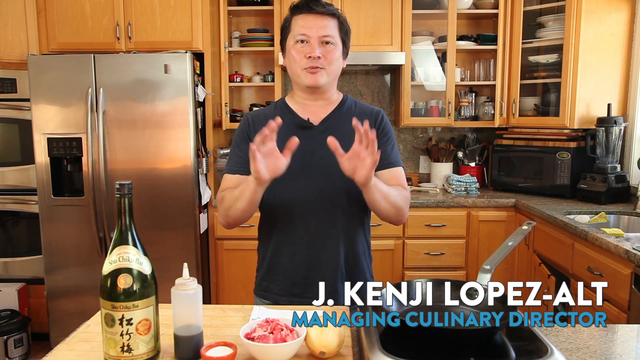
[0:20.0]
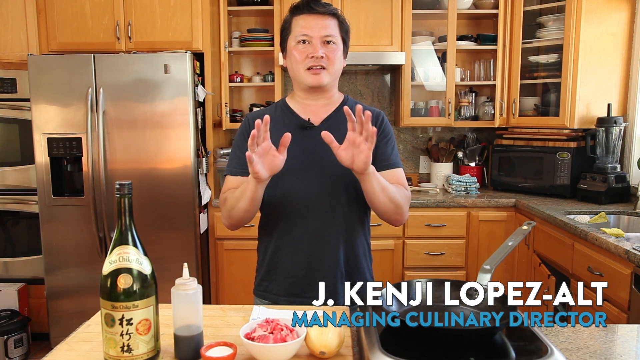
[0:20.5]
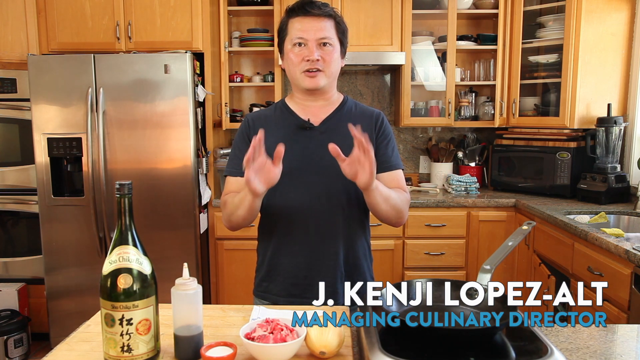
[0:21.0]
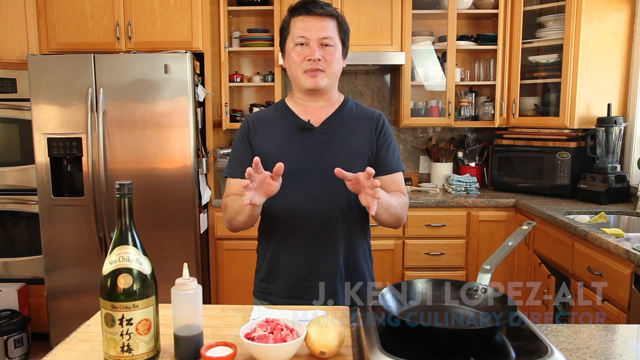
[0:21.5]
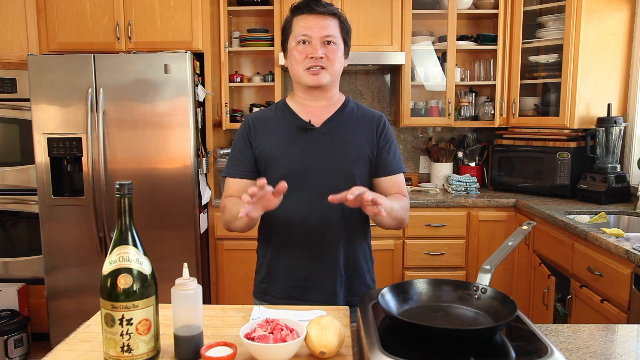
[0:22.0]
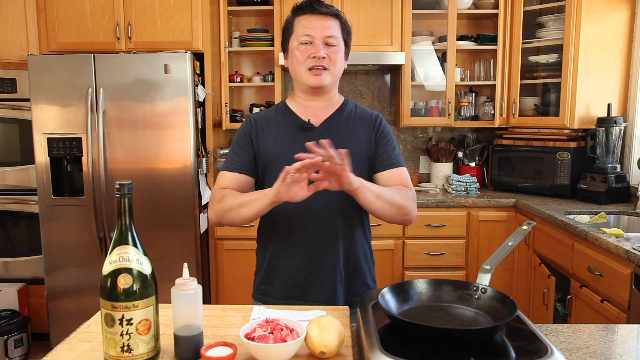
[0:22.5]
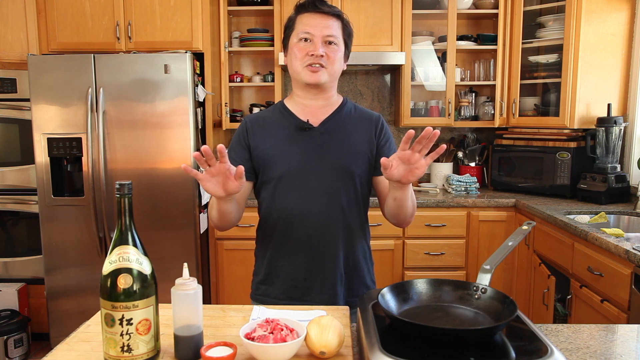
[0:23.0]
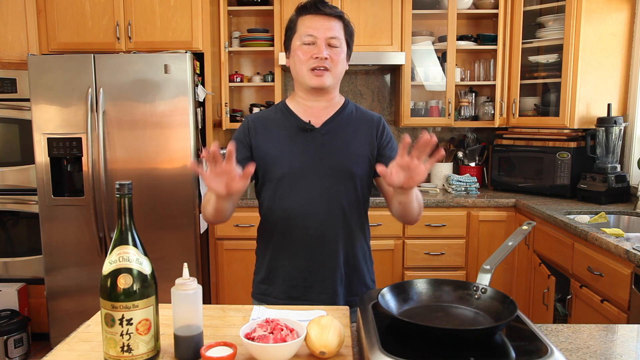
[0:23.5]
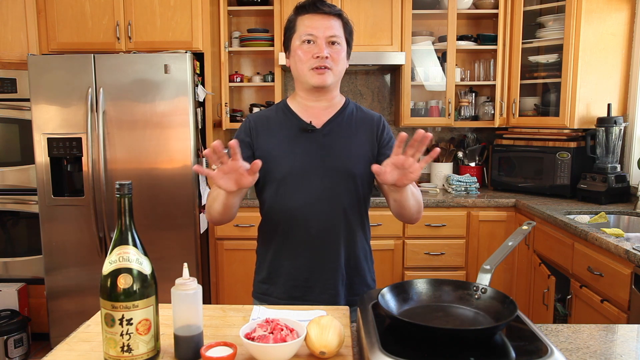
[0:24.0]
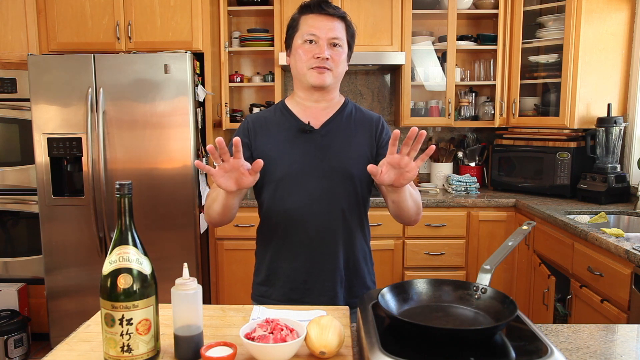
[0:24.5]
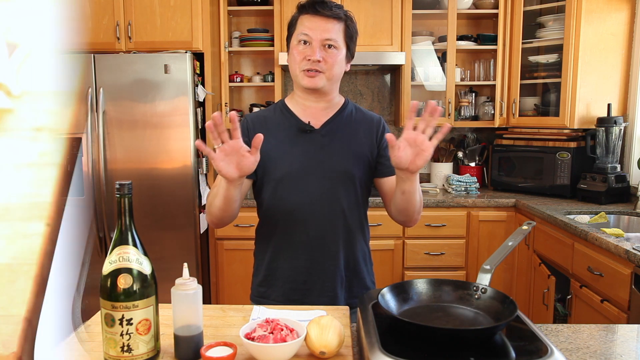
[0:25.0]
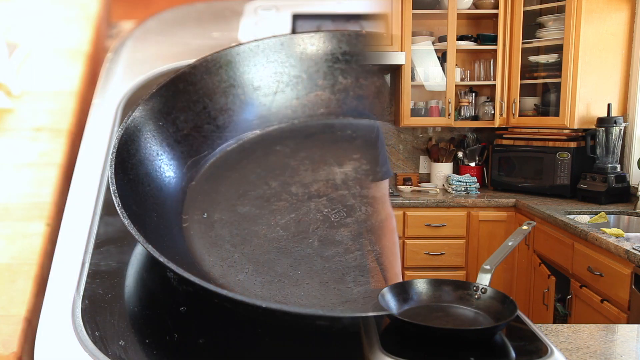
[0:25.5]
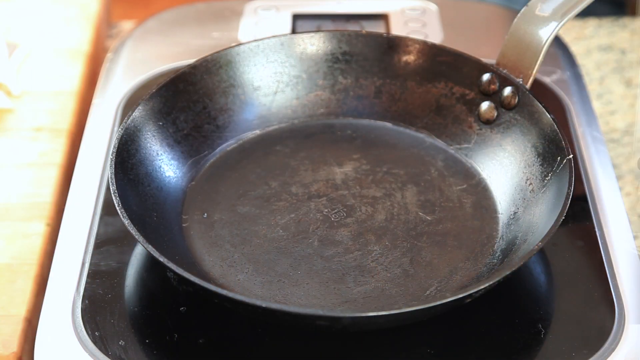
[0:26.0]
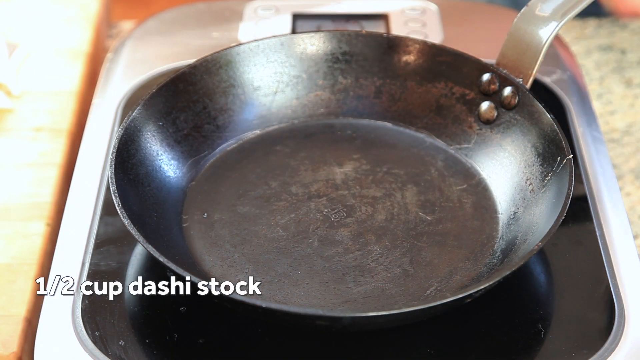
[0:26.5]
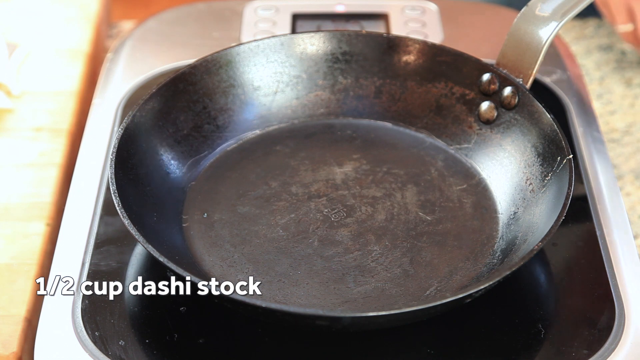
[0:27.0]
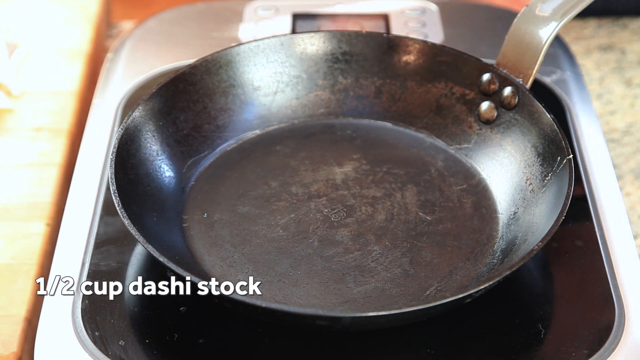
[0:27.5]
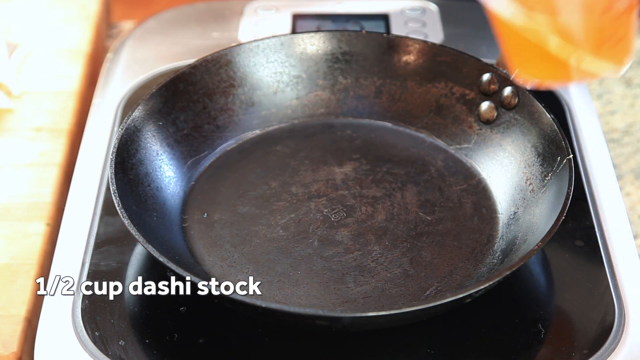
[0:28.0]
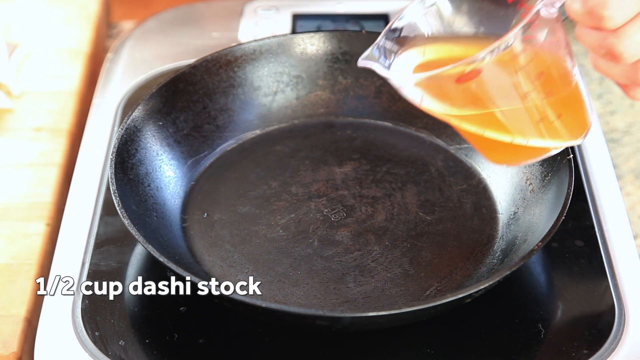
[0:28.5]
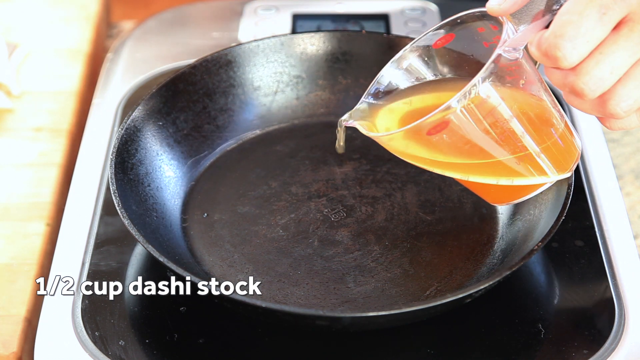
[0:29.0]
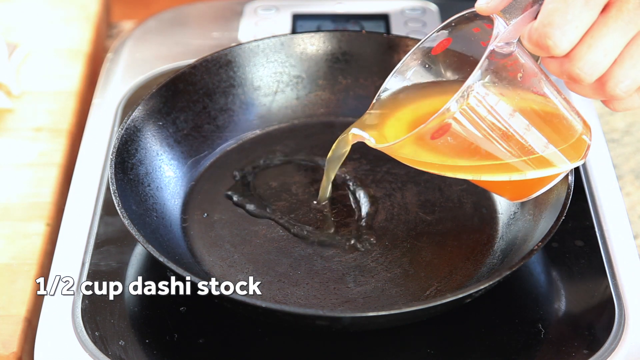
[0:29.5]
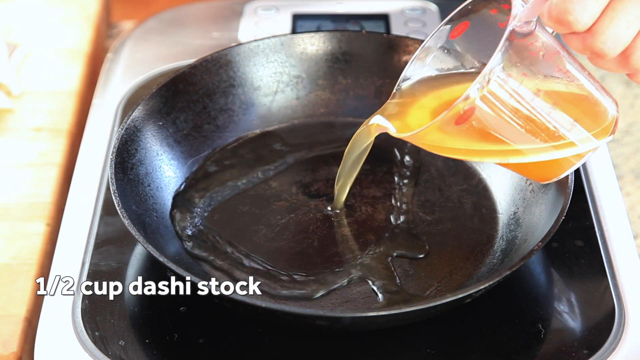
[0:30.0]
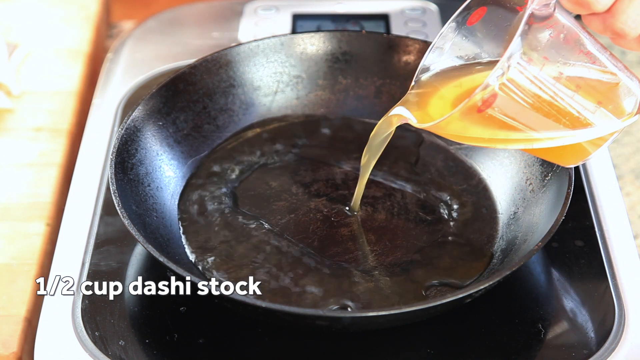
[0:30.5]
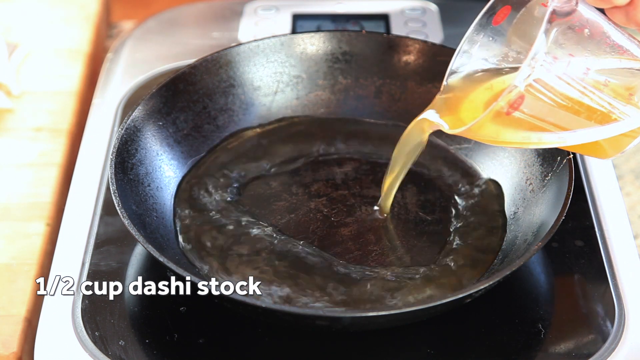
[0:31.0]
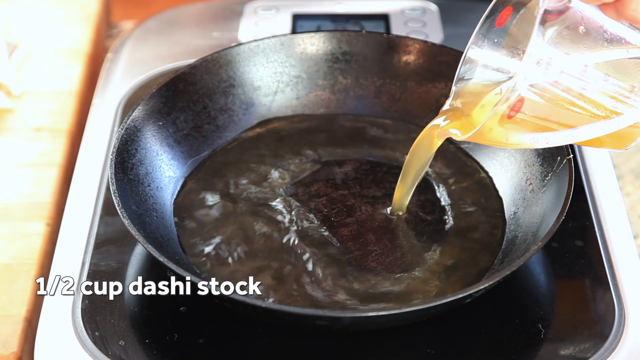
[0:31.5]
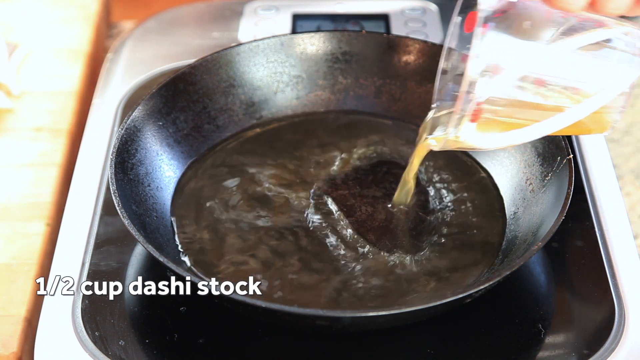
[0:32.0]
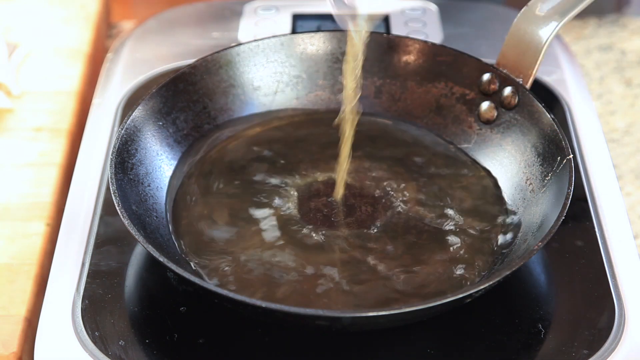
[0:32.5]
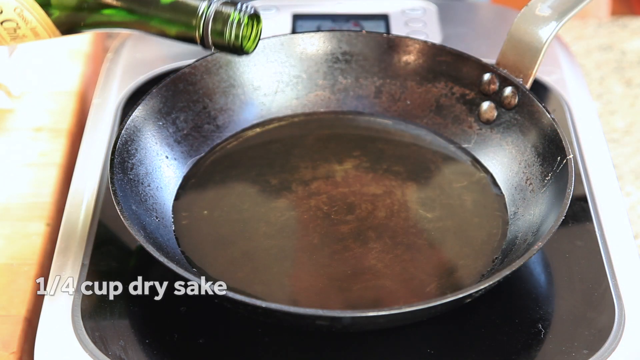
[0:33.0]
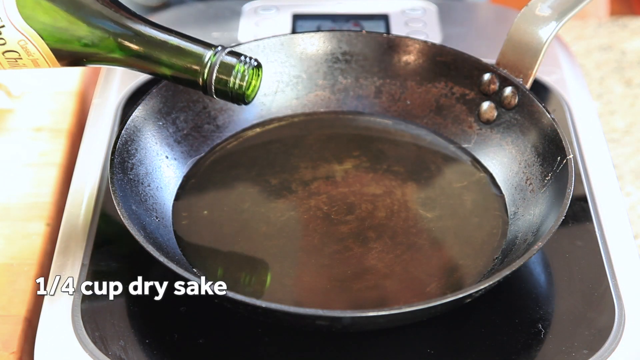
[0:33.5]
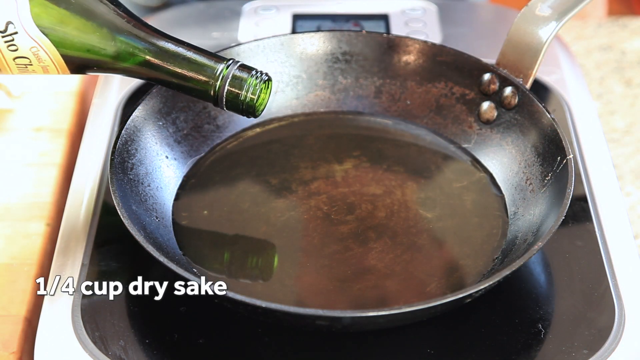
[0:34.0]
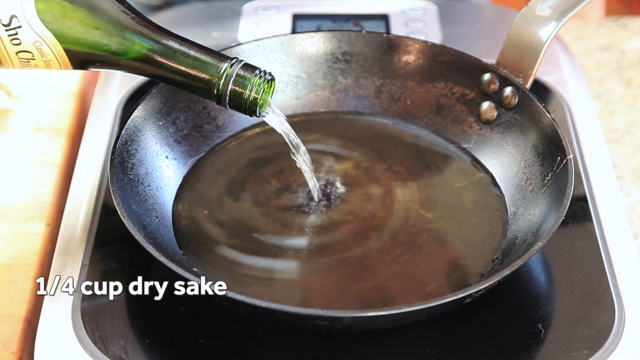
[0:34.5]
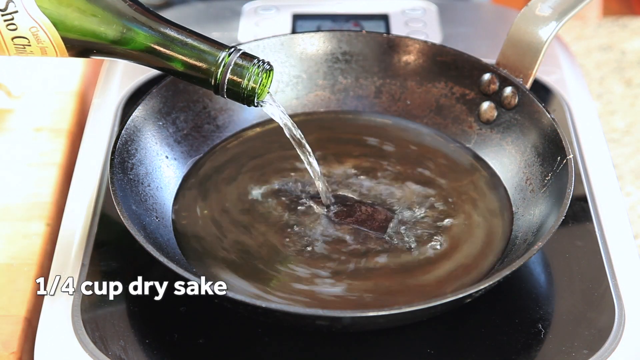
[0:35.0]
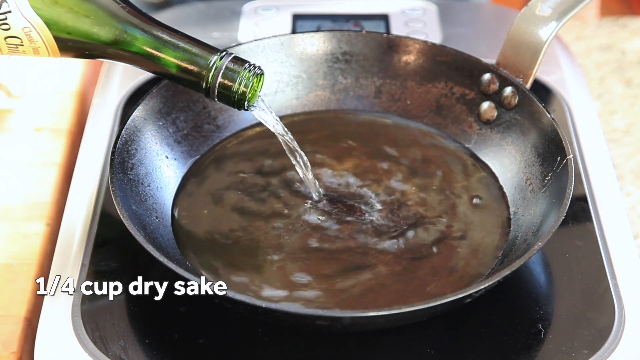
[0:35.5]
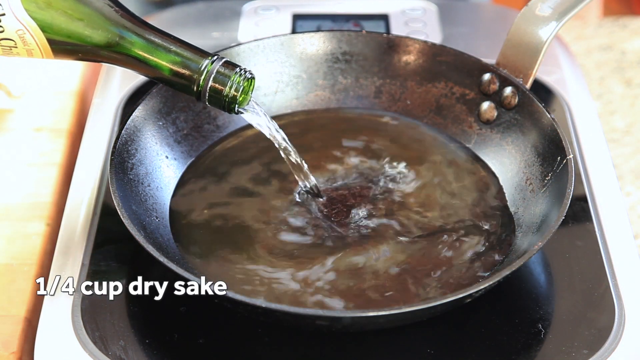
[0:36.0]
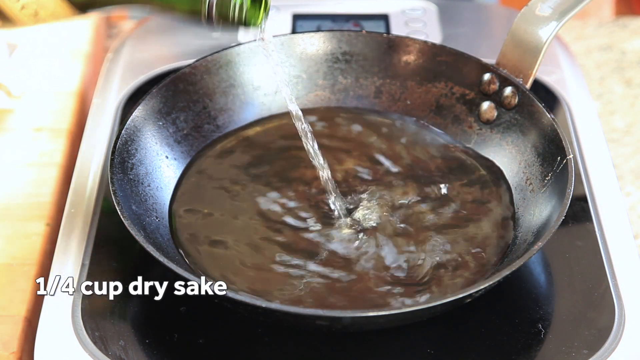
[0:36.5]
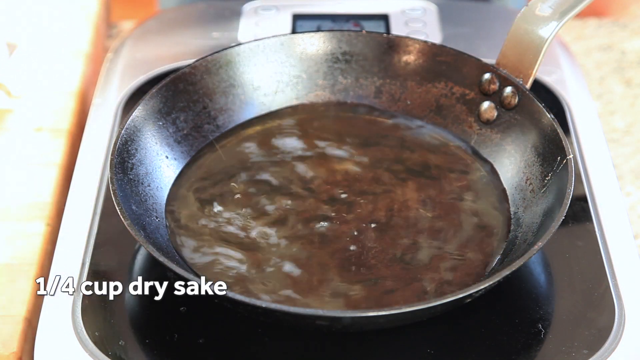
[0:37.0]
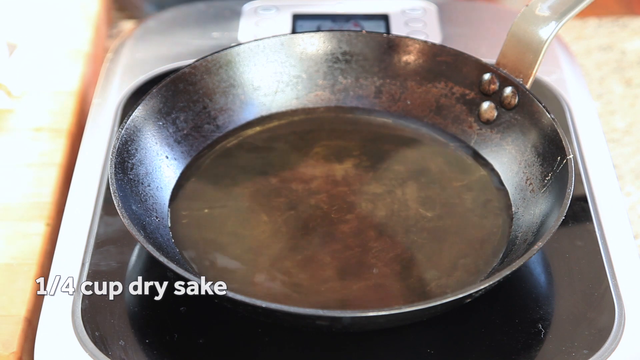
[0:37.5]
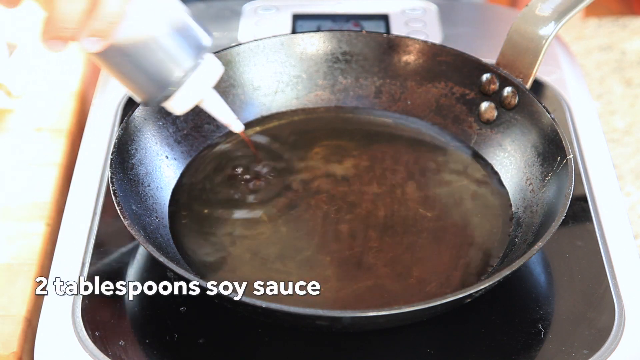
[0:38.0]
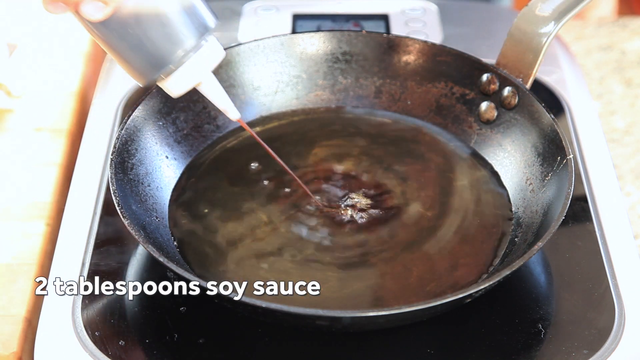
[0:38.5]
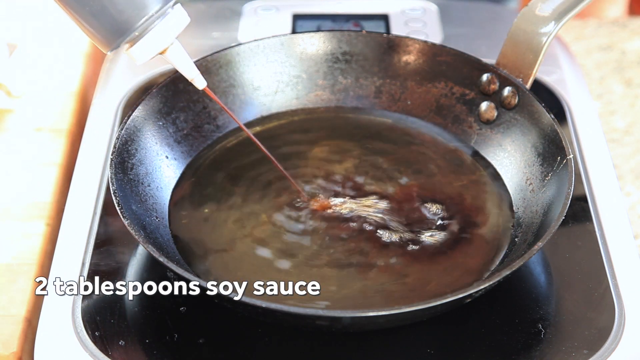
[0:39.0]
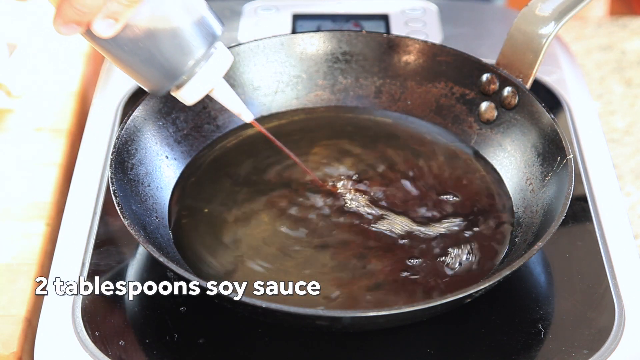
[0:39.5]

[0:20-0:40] J. Kenji Lopez is still in the kitchen, talking to the camera and using his hands very expressively the entire time, putting his palms up and palms down. It cuts to a close-up of a pan with the text "1/2 cup dashi broth", and dashi broth is poured into the pan from a Pyrex liquid measuring cup; the person pouring is not seen. After the dashi broth is in, it cuts to the next ingredient: the text reads "1/4 cup dry sake" and sake is poured in from the bottle. Then the text reads "2 tablespoons soy sauce" and soy sauce is squeezed into the pan from a white plastic squeeze bottle in the same style as a ketchup bottle.